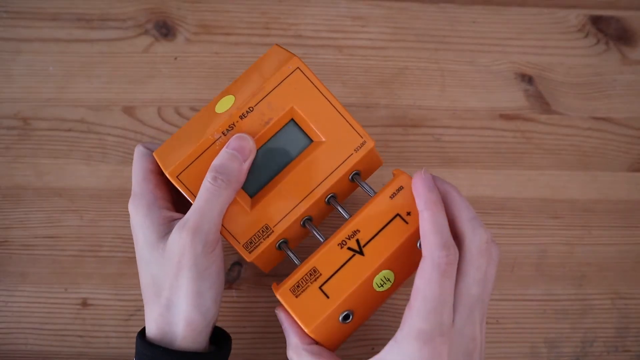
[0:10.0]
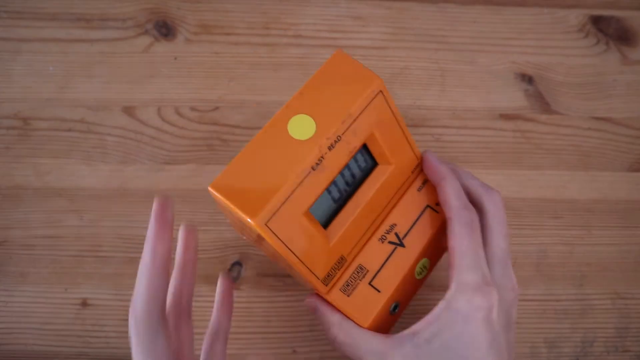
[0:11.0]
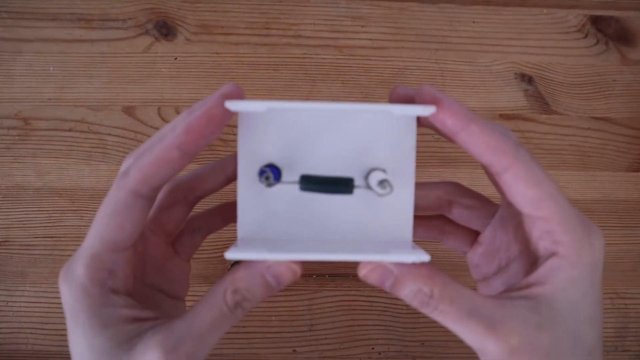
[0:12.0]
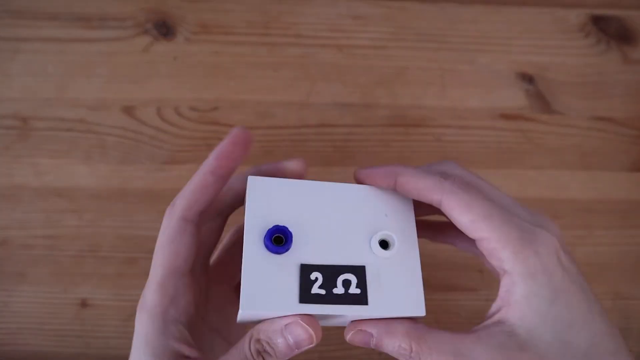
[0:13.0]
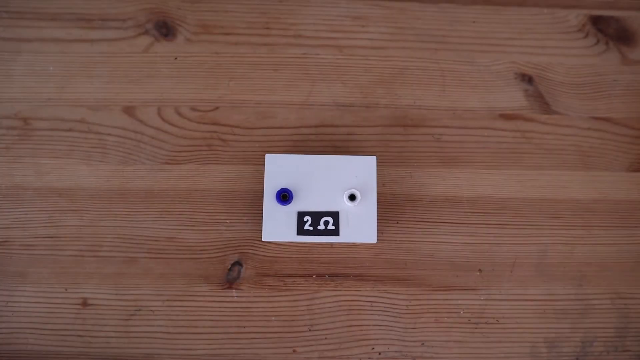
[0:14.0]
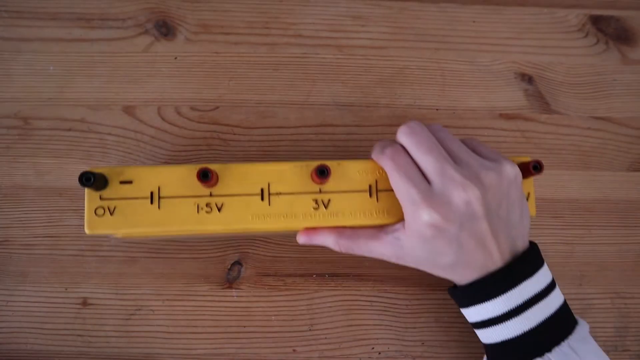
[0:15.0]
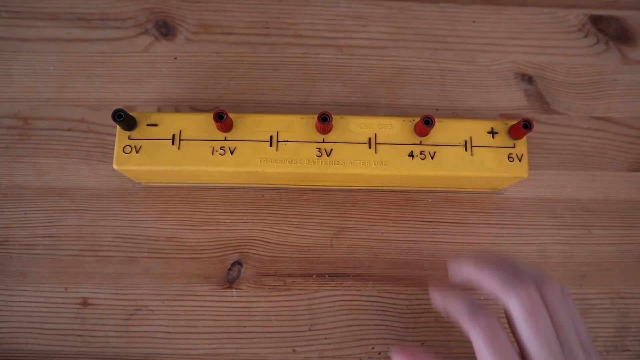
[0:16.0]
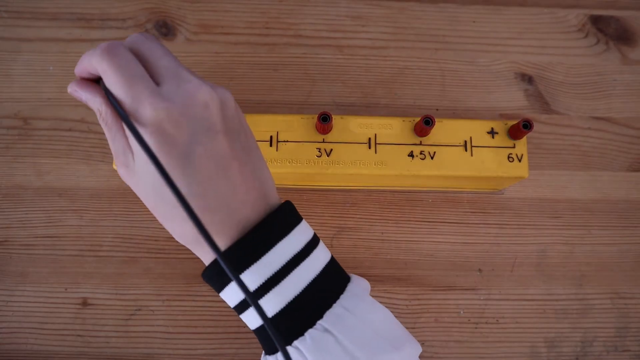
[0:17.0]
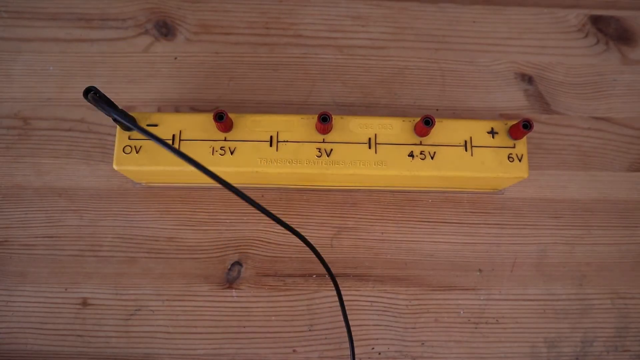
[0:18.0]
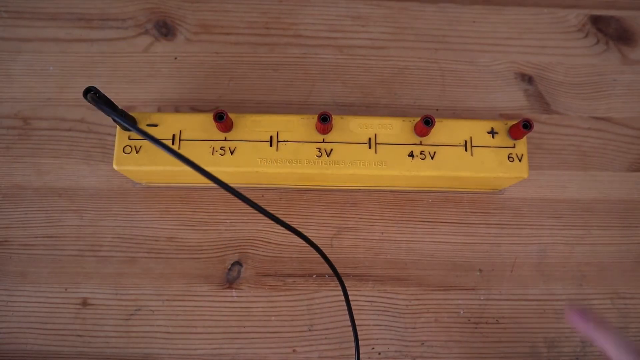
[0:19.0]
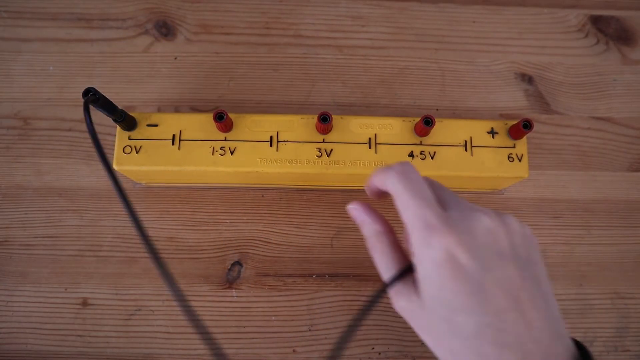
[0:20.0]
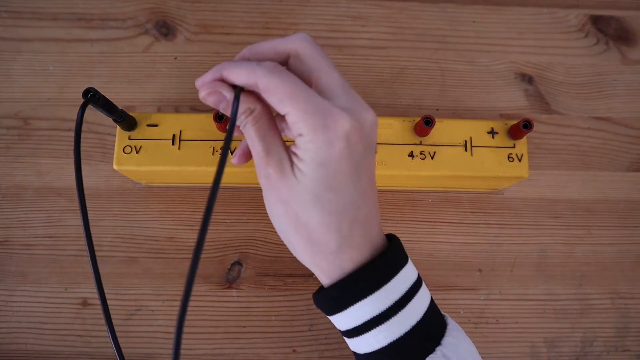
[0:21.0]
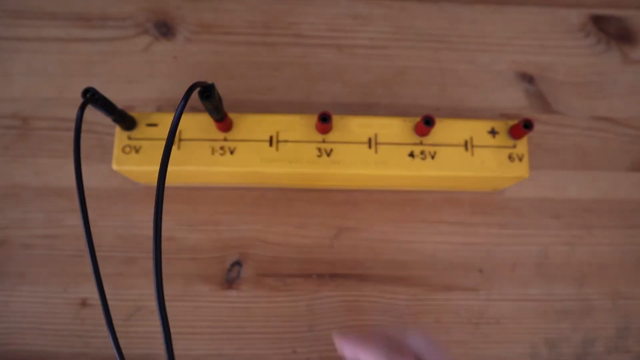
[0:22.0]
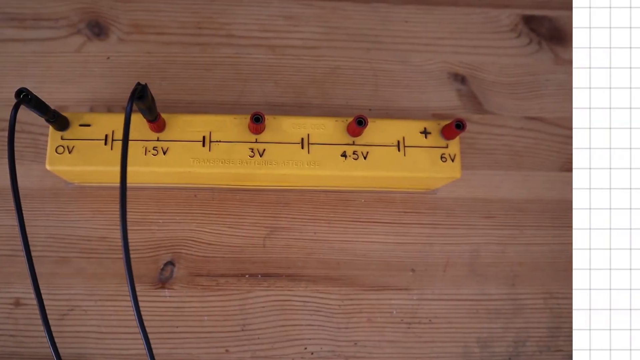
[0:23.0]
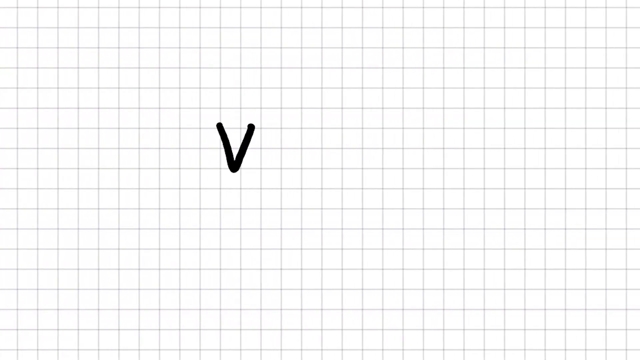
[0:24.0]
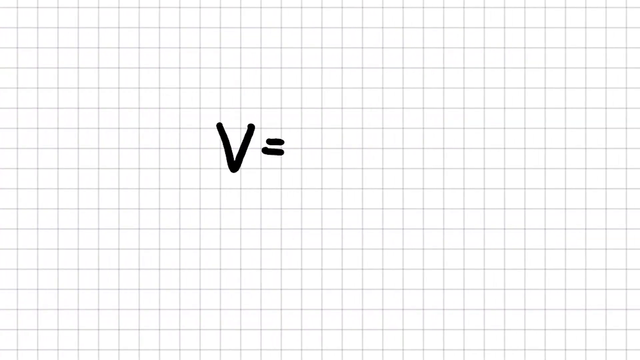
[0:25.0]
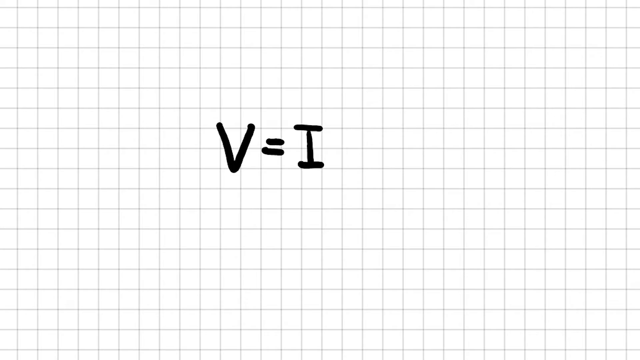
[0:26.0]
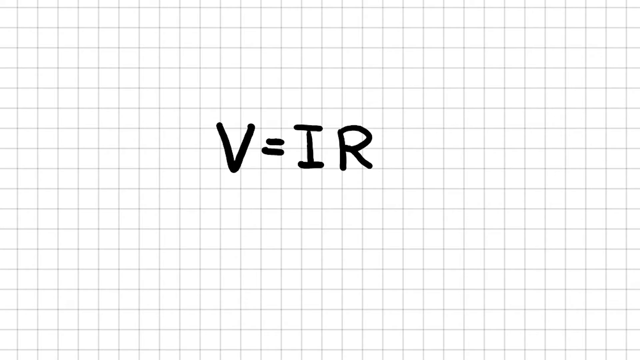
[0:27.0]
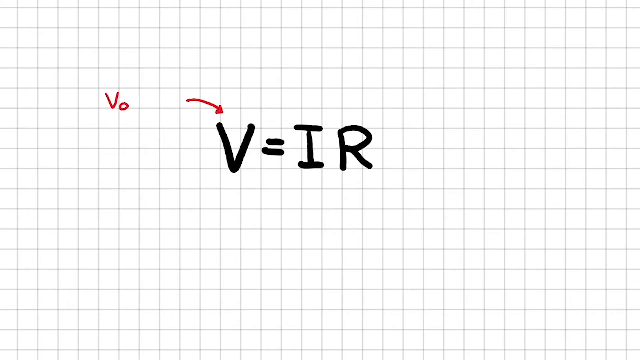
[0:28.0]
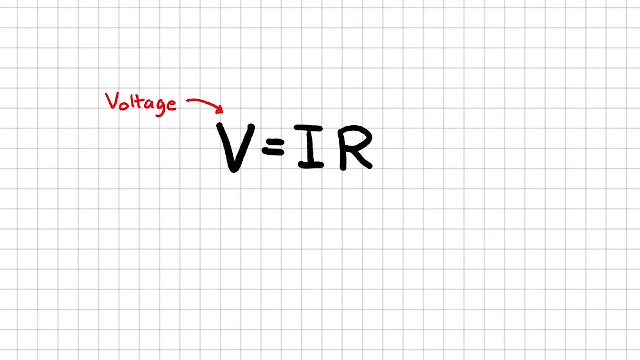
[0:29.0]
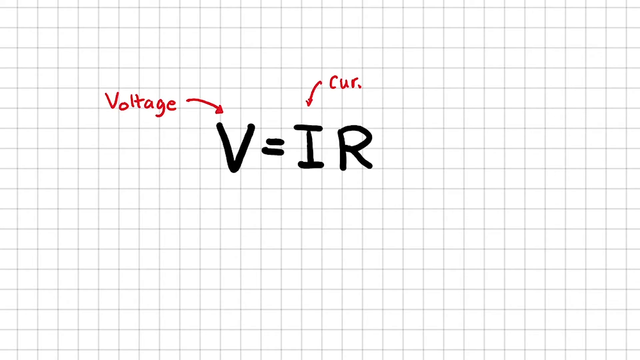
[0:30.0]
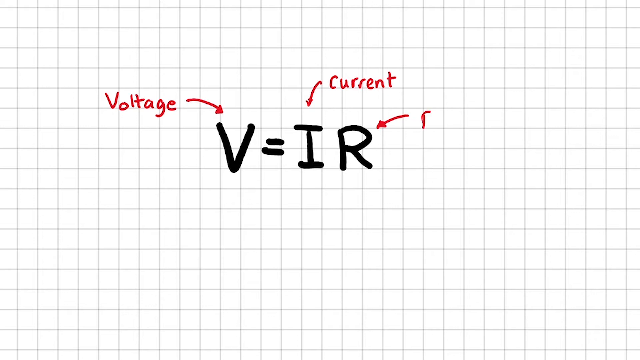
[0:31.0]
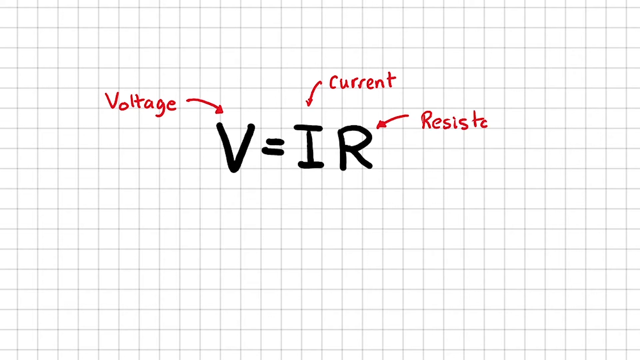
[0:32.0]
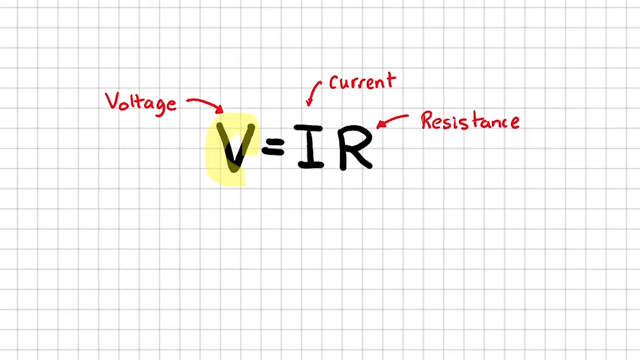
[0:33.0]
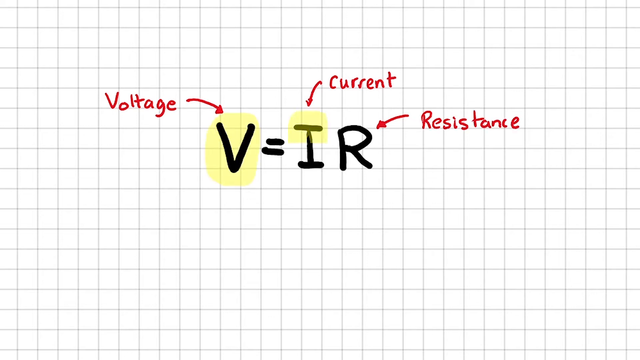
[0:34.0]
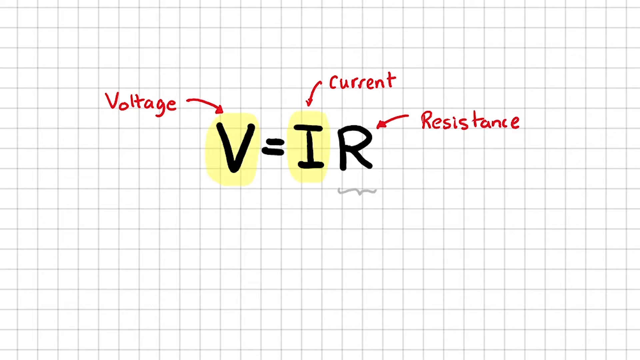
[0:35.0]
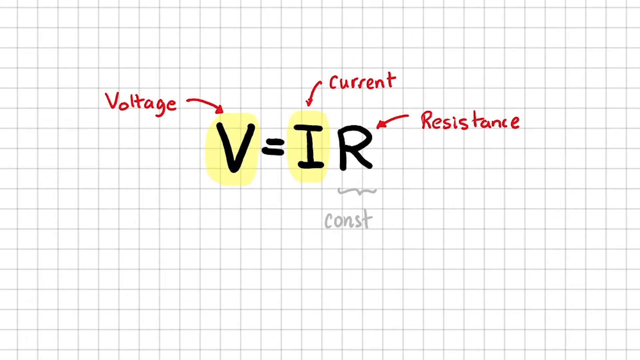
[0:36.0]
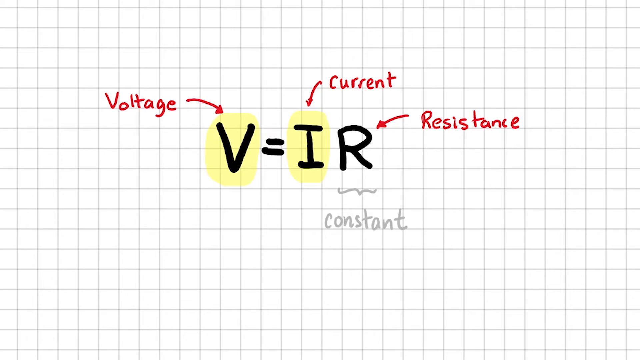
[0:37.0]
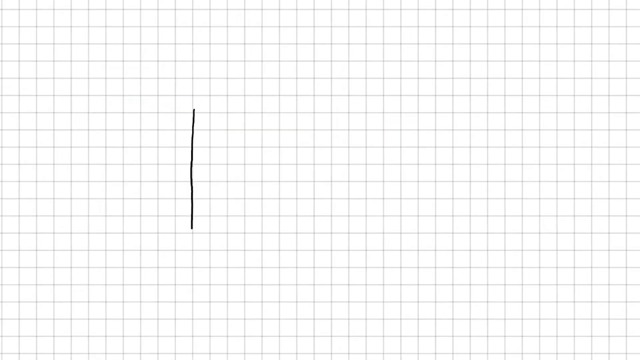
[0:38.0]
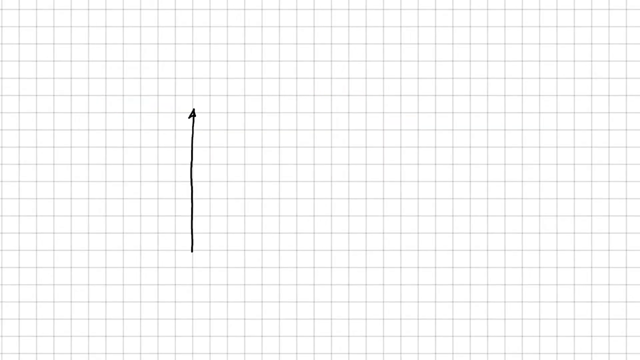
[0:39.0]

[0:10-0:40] The orange plug-in is plugged into the orange box, and the hand moves away. A white box with some holes in it is put down on the wooden table and then taken away. Next comes a yellow box with a number of dials on it and a scale with labels including "OV", "1.5", "3V" and "4.5". One of the black wires is plugged into OV, a finger taps on a couple of the other plug-in points, and the other end of the wire is plugged into 1.5V. A graph-and-table screen then appears showing "V = IR", with red arrows pointing to V for voltage, to I for current and to R for resistance. V and I are highlighted in yellow, and R is constant. A graph is being drawn on the screen; what it plots is not yet visible, but it could be a line graph or a bar chart, since one axis has an arrow pointing up and the other an arrow pointing to the right.